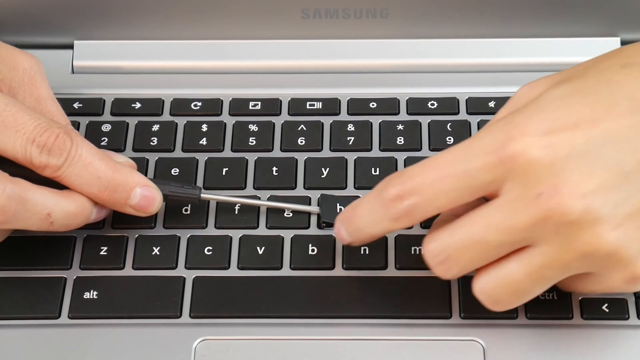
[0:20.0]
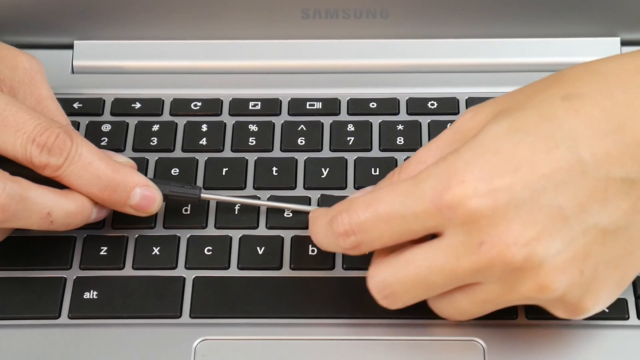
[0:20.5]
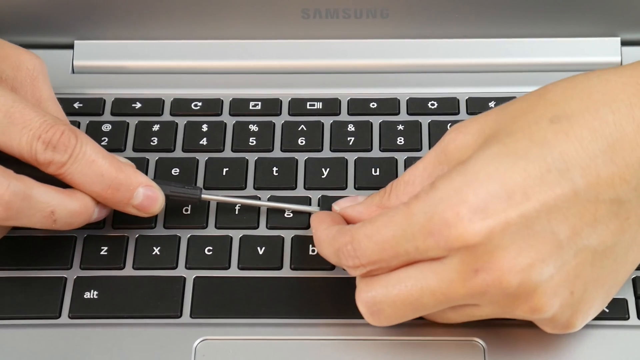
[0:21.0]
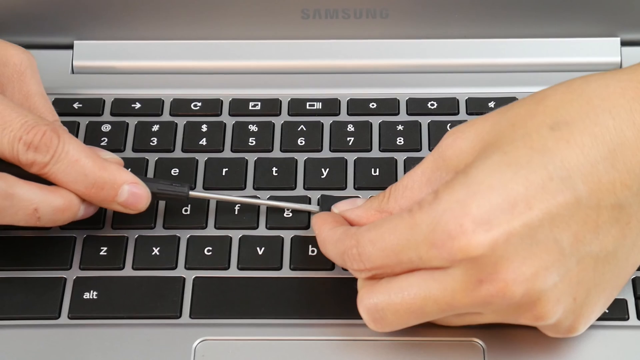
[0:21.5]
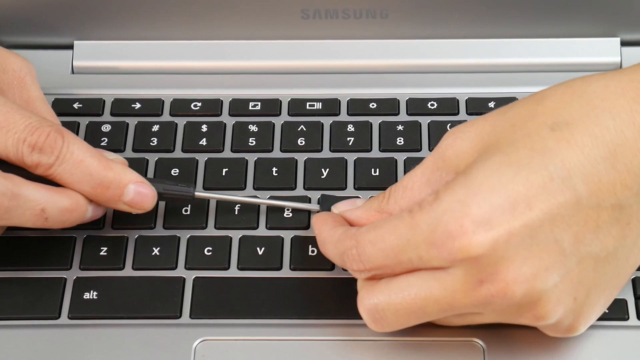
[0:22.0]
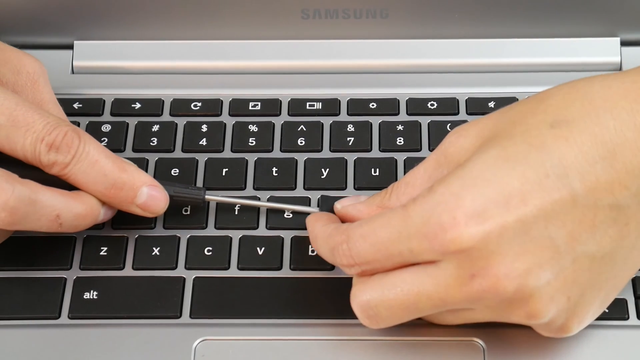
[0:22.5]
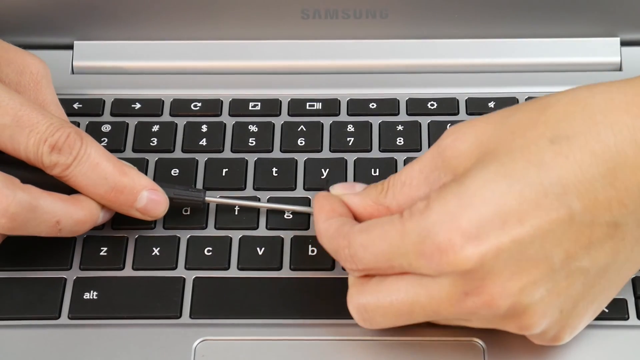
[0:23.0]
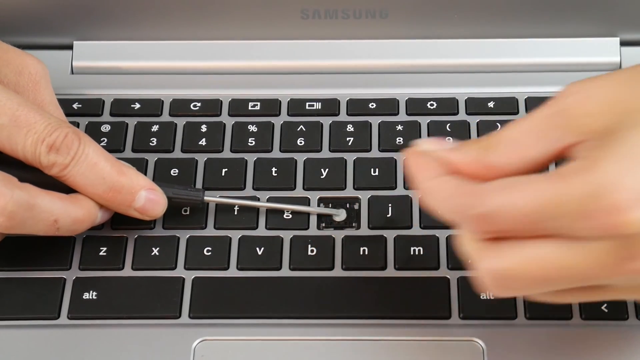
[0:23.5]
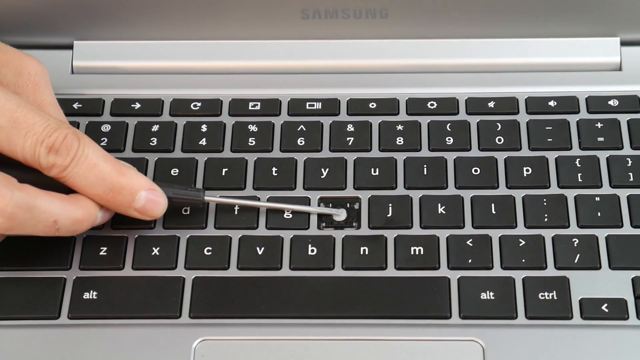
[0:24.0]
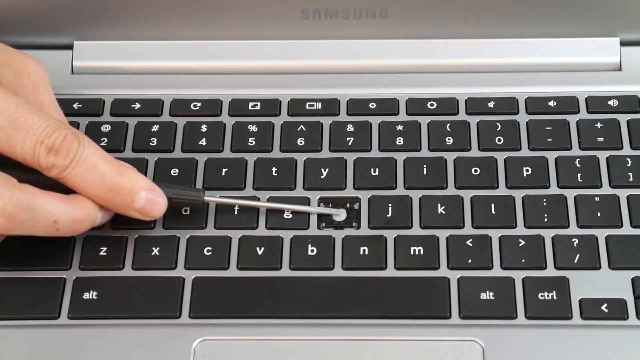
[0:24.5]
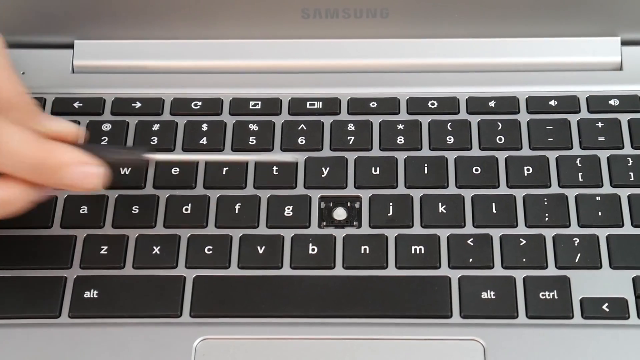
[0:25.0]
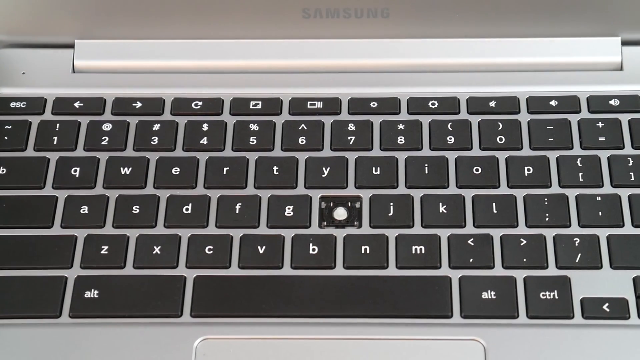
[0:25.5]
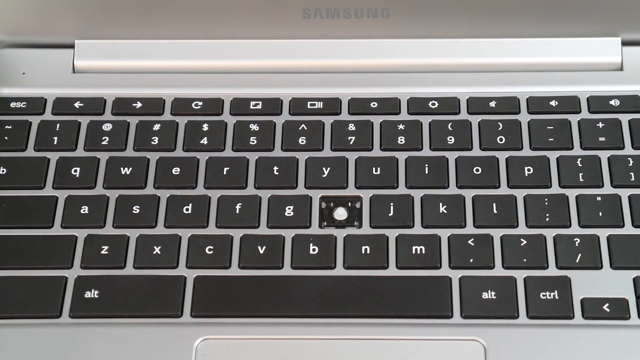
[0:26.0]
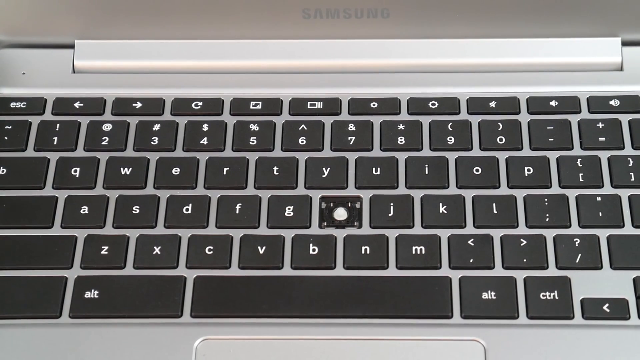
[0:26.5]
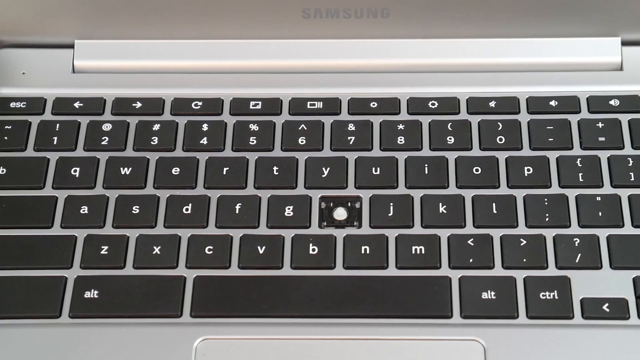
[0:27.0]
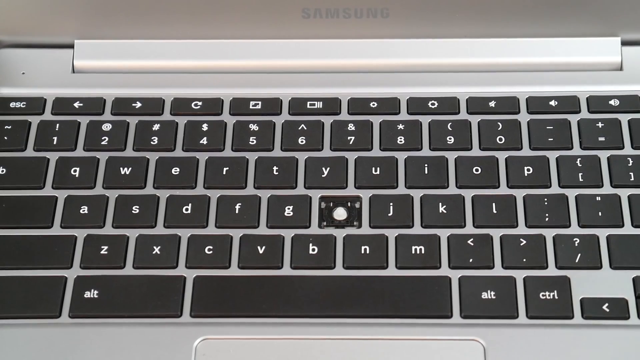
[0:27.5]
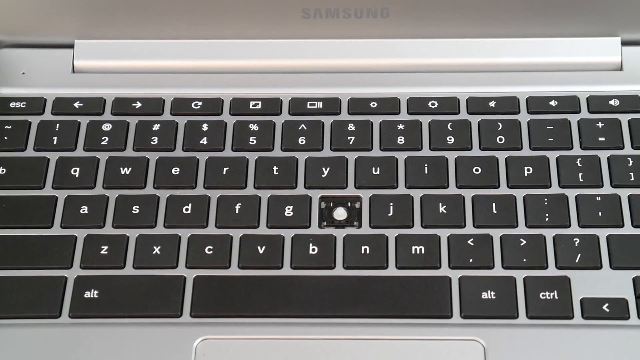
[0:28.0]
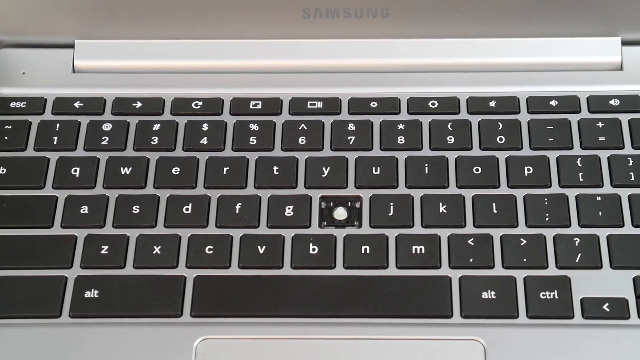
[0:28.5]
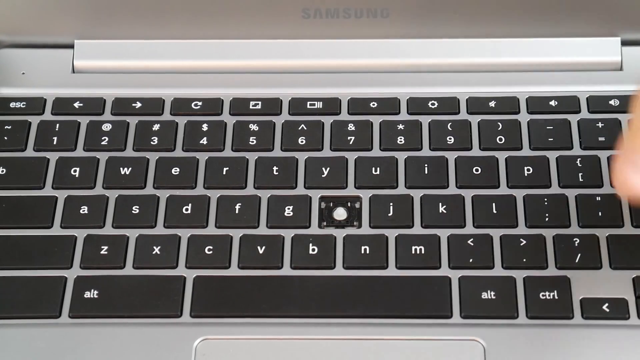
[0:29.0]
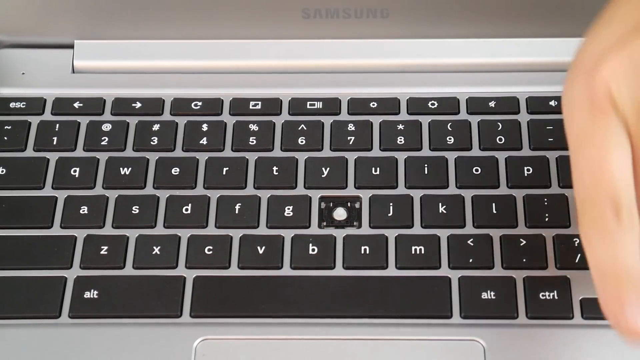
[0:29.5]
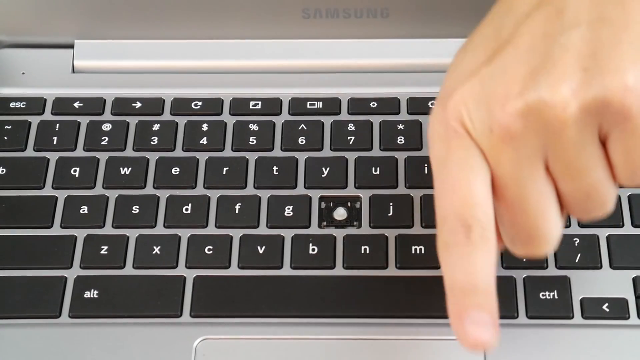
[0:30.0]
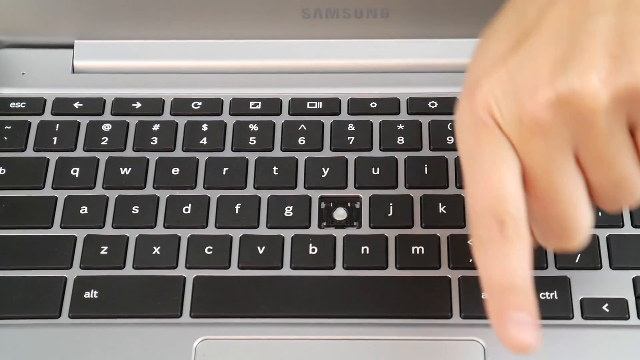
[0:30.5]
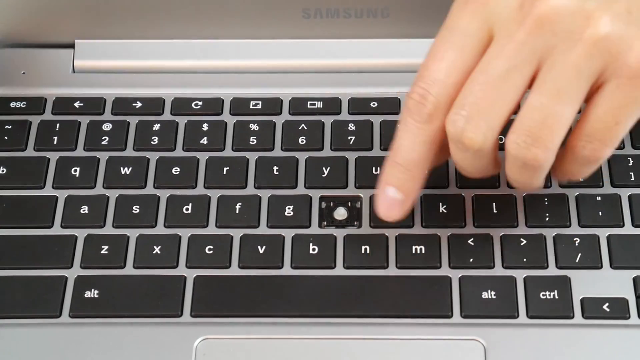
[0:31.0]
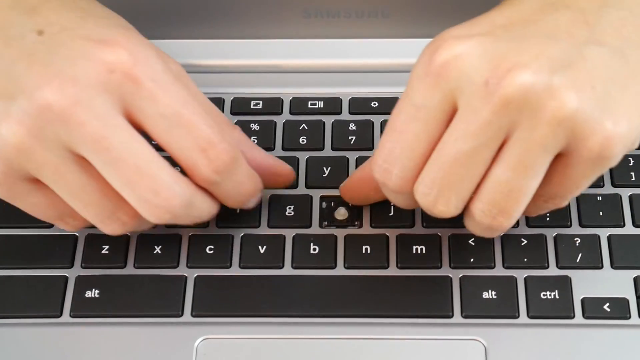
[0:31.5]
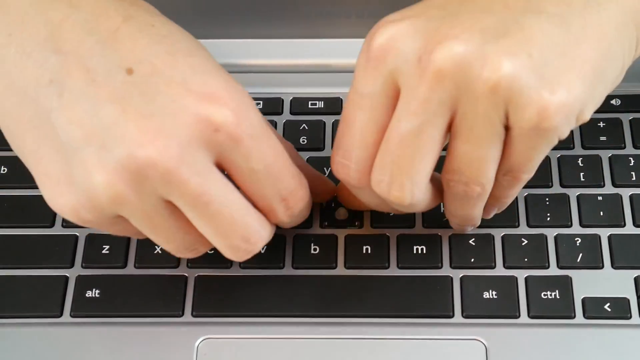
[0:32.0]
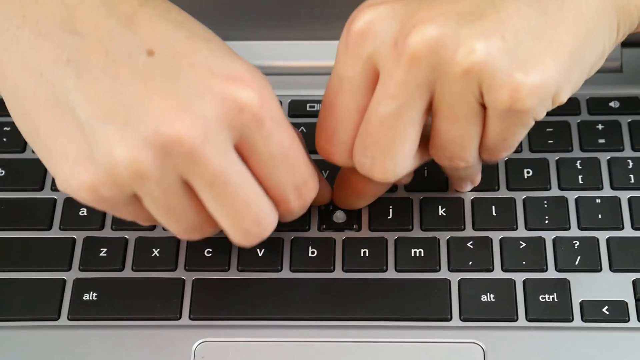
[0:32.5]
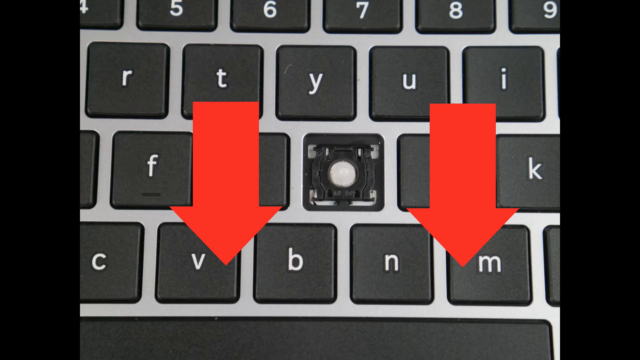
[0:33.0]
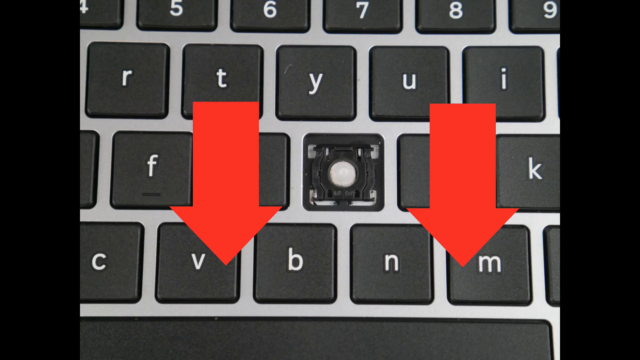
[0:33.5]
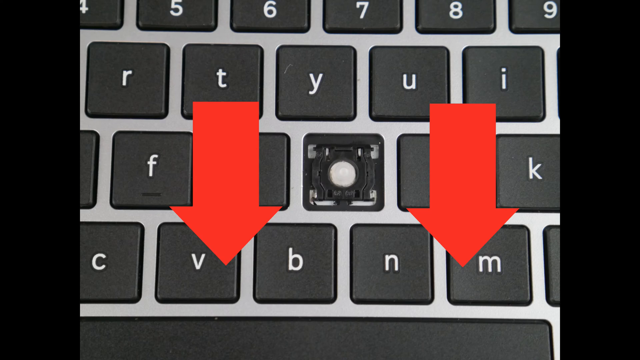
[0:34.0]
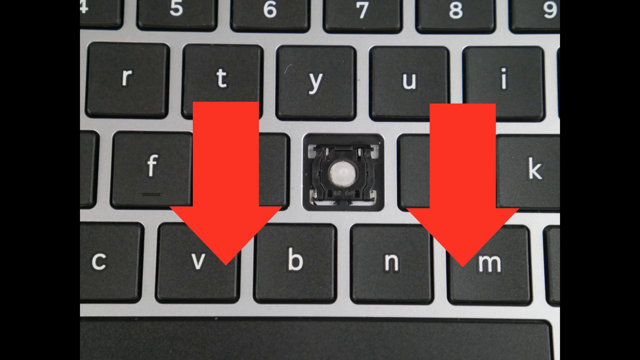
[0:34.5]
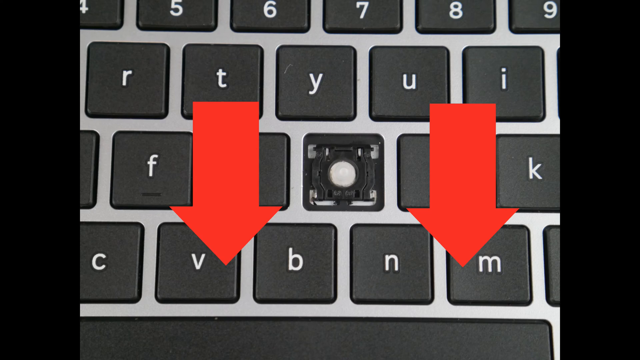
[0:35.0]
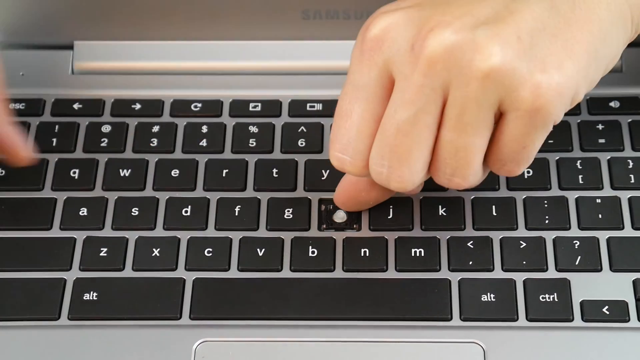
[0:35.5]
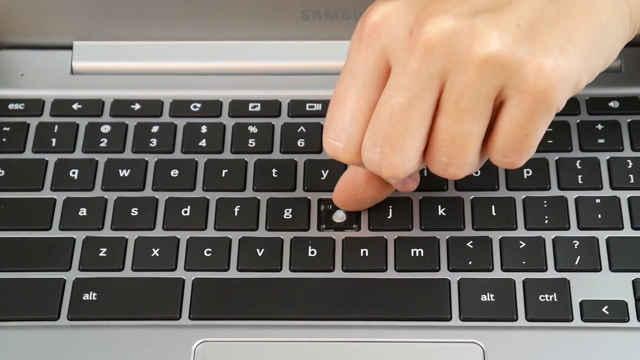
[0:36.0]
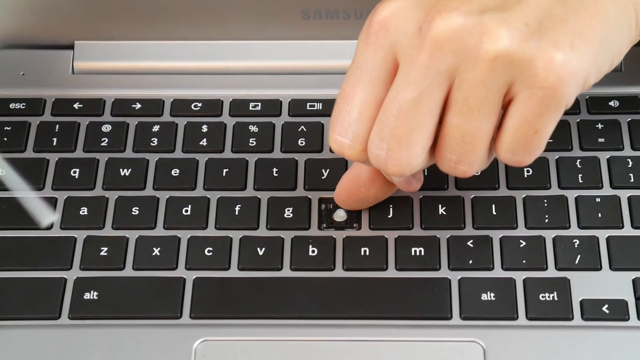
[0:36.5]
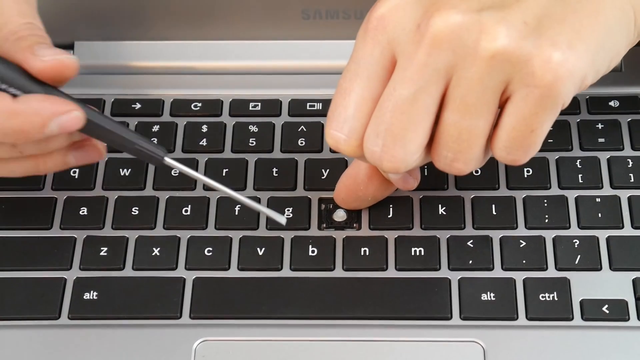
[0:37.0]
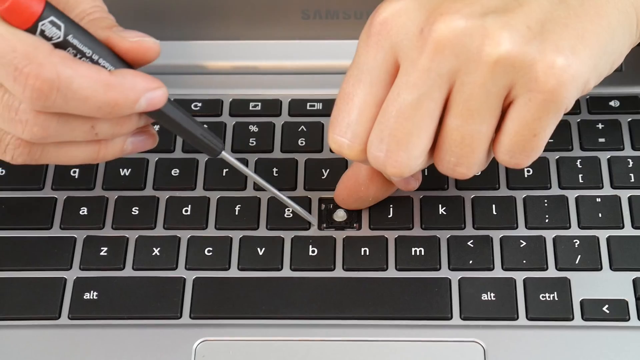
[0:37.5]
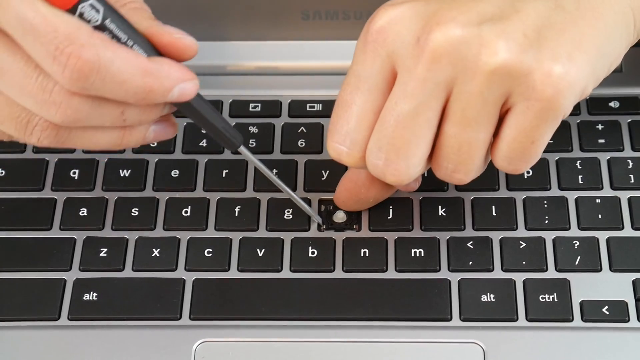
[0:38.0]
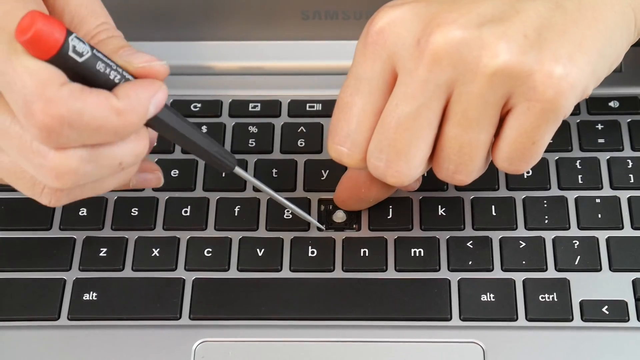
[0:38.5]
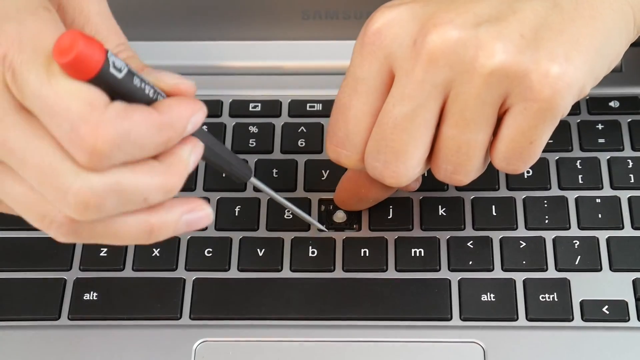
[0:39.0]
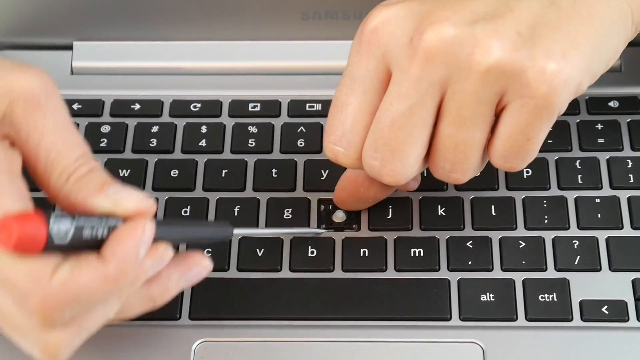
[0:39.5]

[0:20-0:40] He still has the key. His other hand comes in from the right side of the screen, picks the key up and moves it out of view. The screwdriver stays kind of over that area and is then removed, leaving the keyboard without the H key, which stays in view for a second. His hand from the right side comes back in with a finger pointing down, and he tries to grab the area where the H key was removed with his thumbs. For a moment two arrows pointing downward appear, and then one of his thumbs is underneath this area. He brings the screwdriver back.